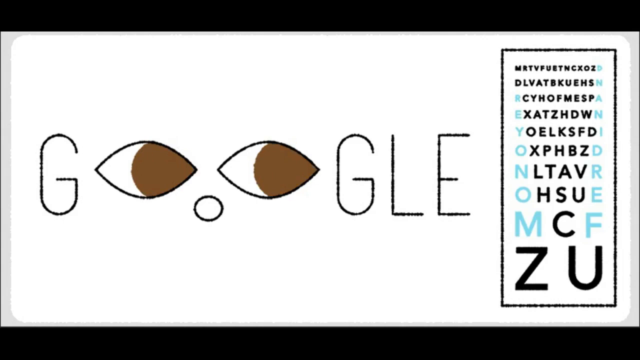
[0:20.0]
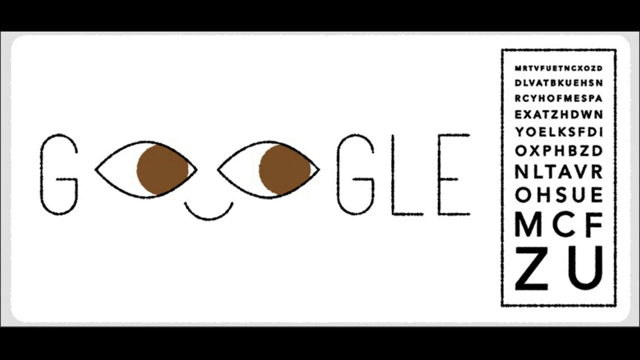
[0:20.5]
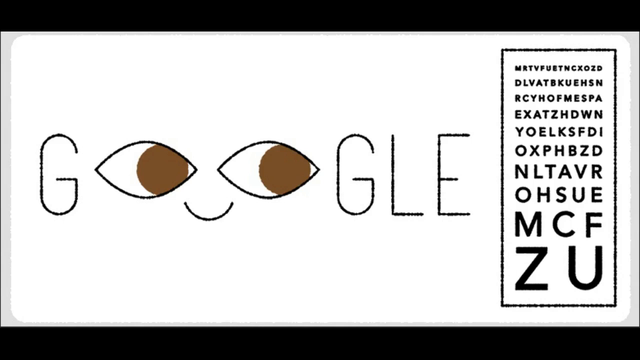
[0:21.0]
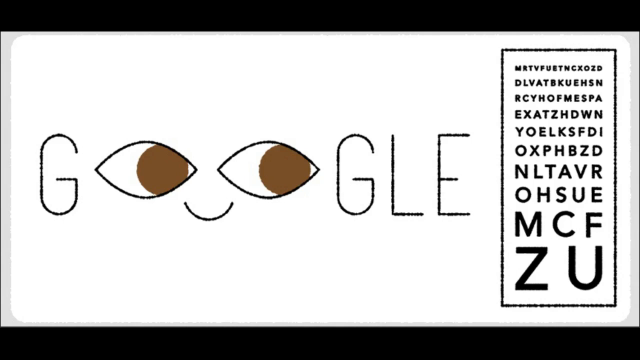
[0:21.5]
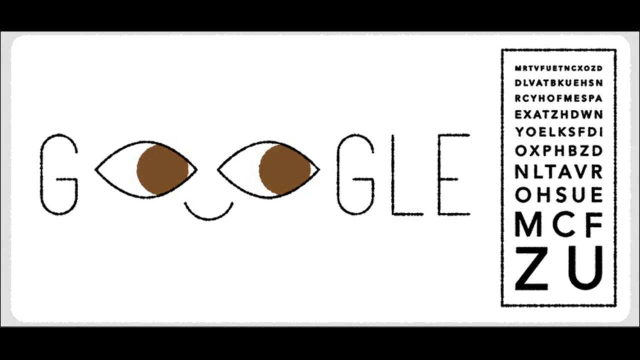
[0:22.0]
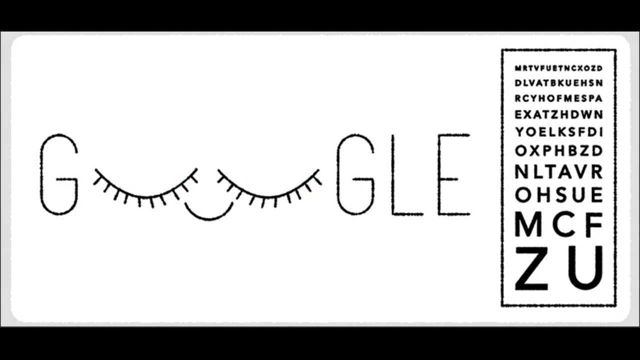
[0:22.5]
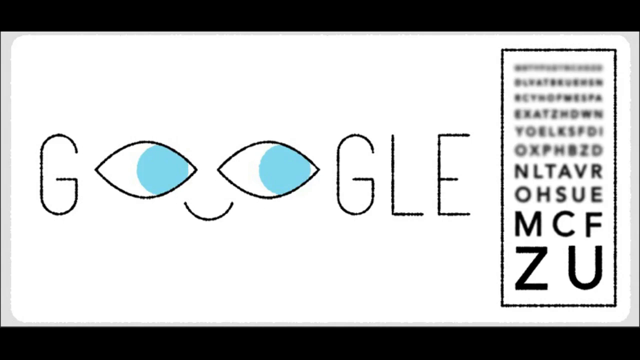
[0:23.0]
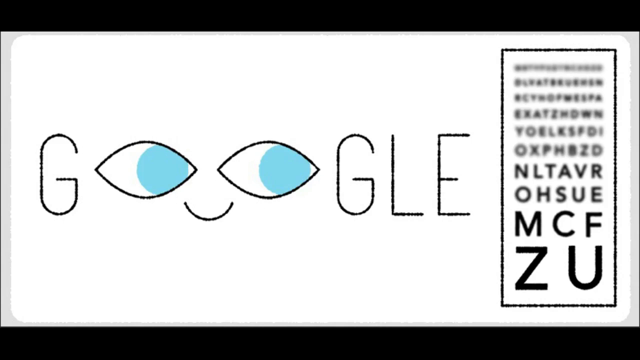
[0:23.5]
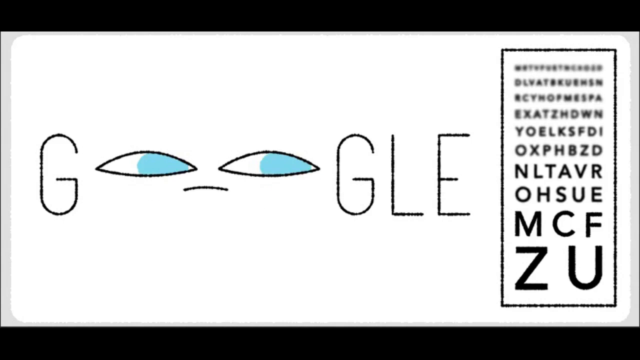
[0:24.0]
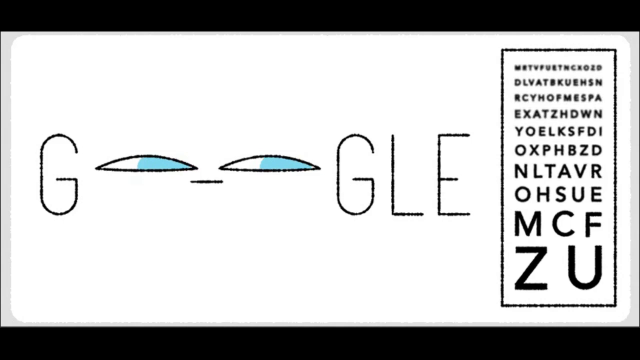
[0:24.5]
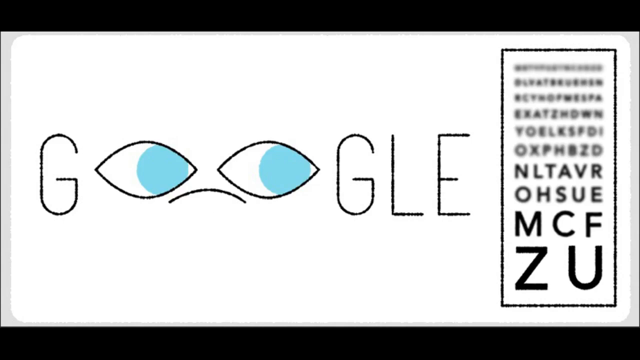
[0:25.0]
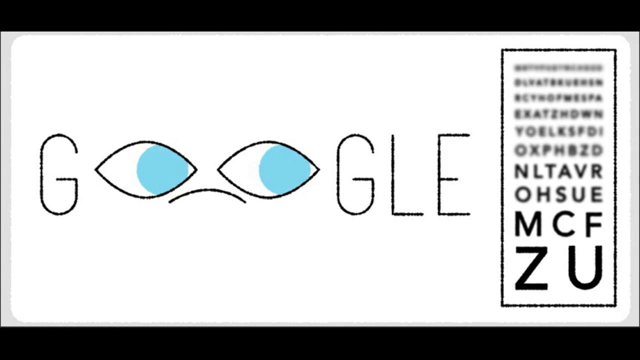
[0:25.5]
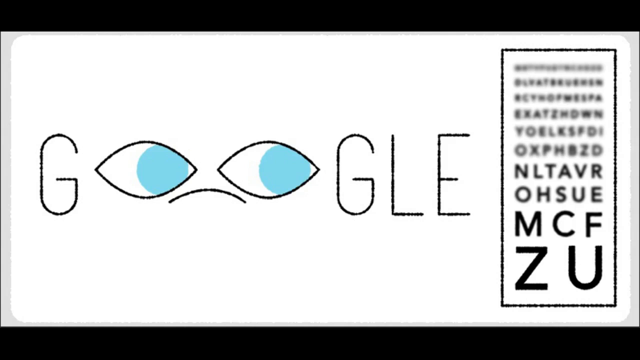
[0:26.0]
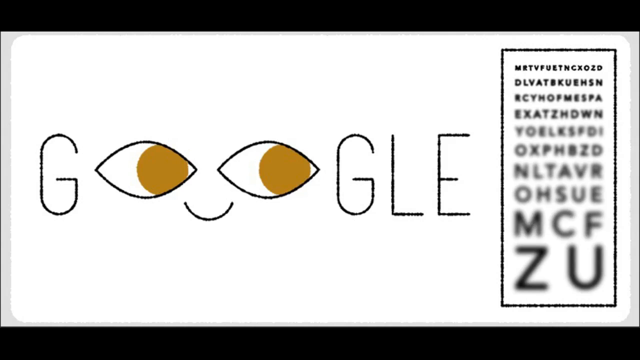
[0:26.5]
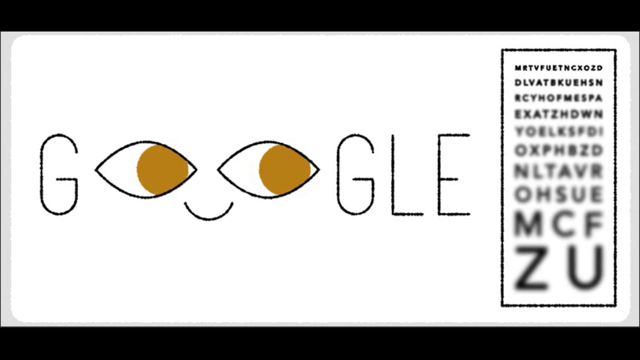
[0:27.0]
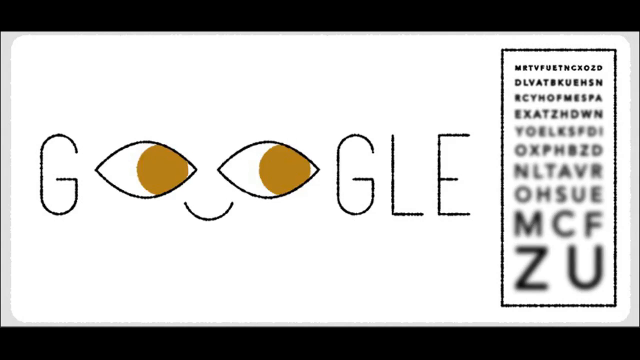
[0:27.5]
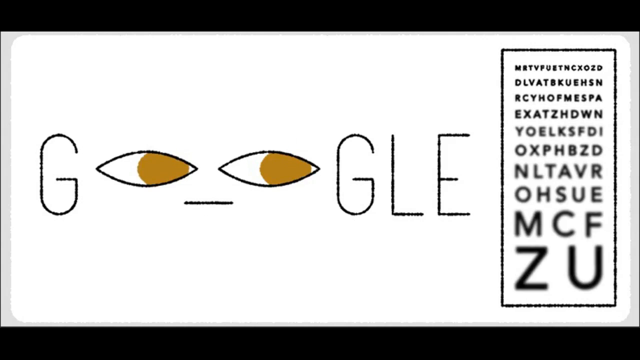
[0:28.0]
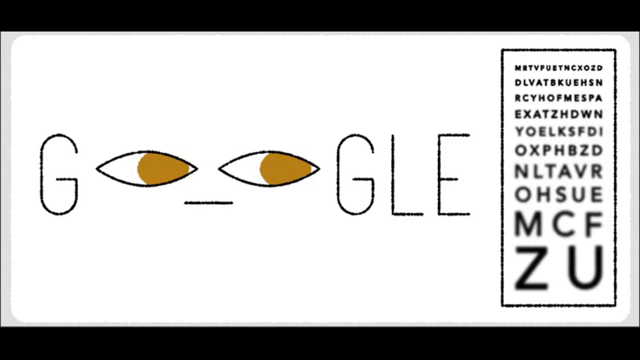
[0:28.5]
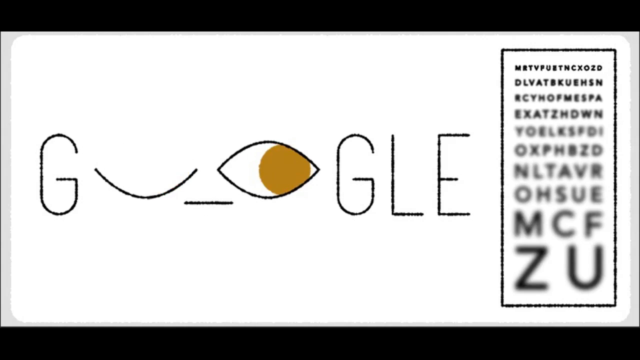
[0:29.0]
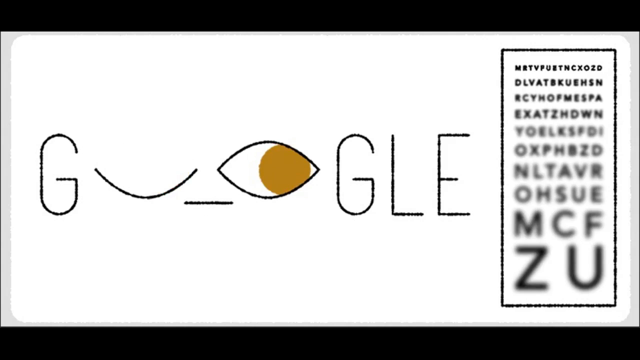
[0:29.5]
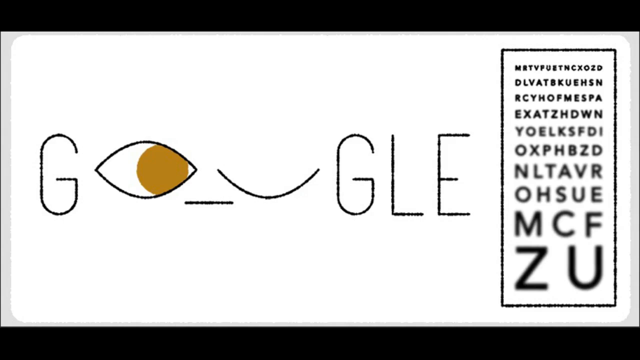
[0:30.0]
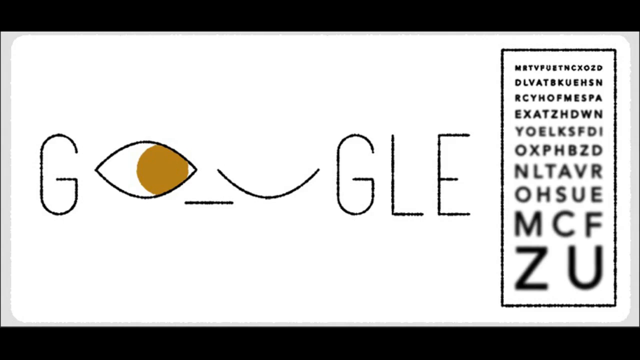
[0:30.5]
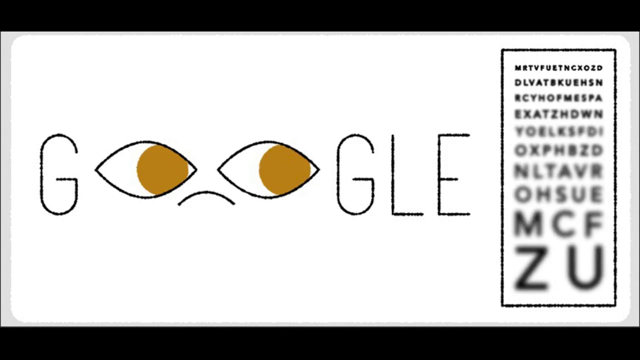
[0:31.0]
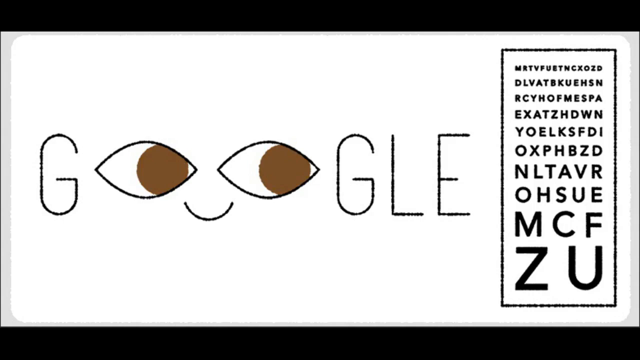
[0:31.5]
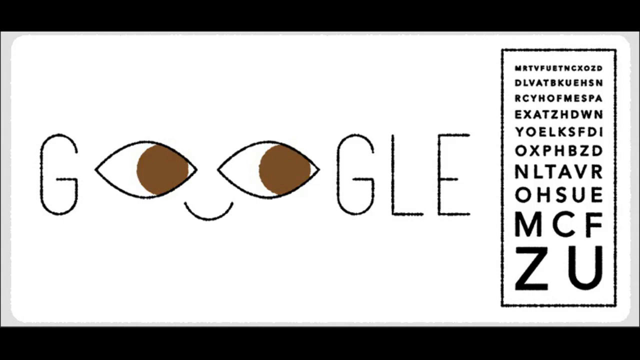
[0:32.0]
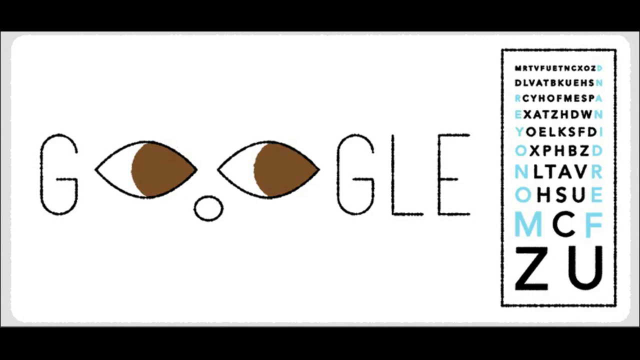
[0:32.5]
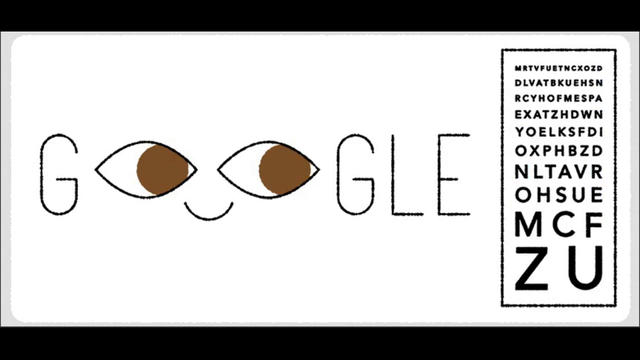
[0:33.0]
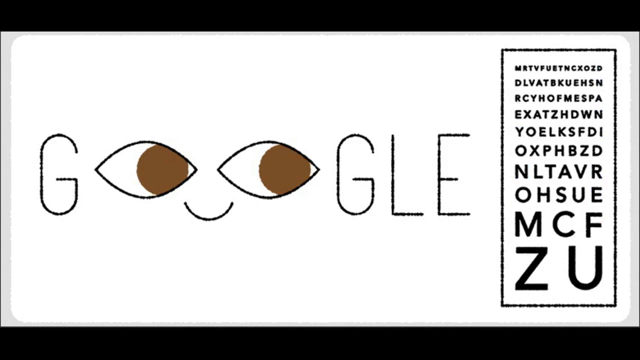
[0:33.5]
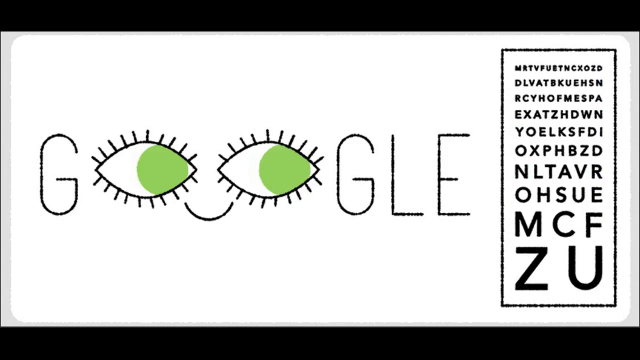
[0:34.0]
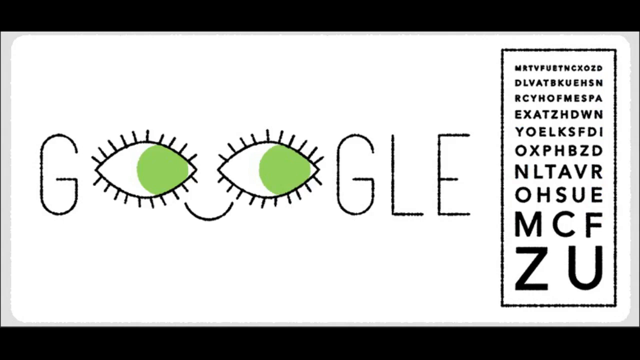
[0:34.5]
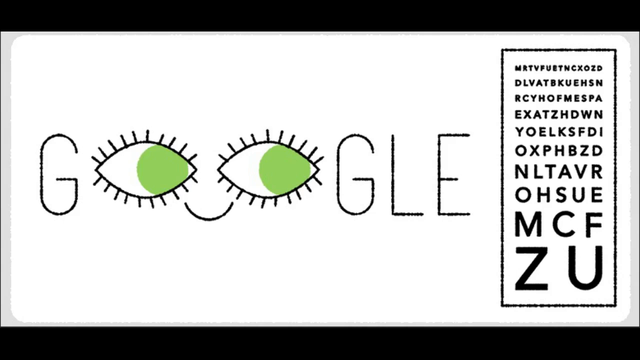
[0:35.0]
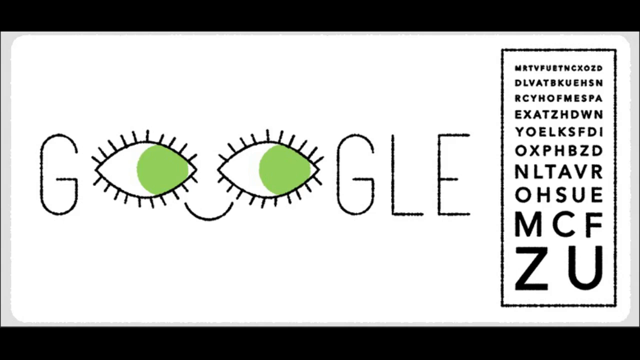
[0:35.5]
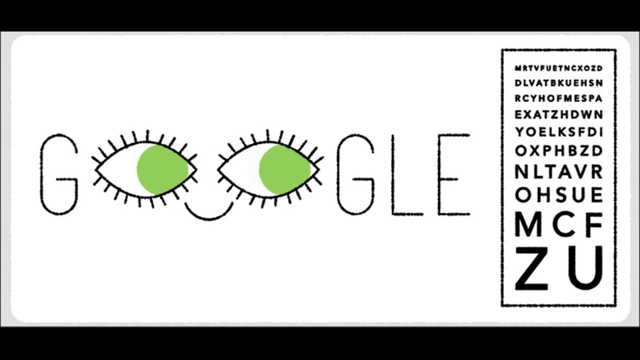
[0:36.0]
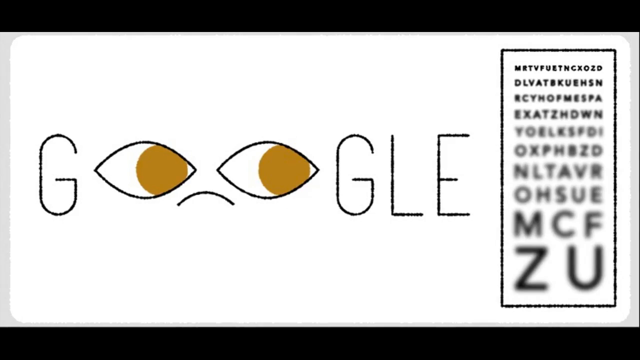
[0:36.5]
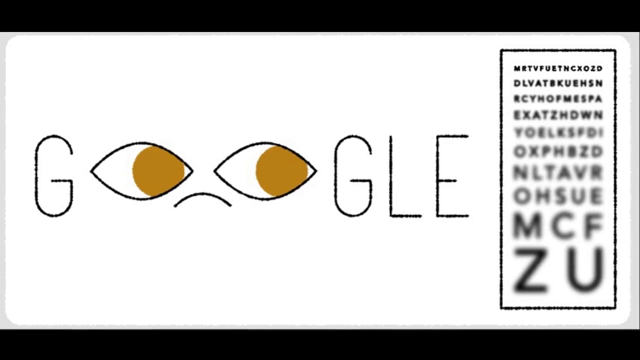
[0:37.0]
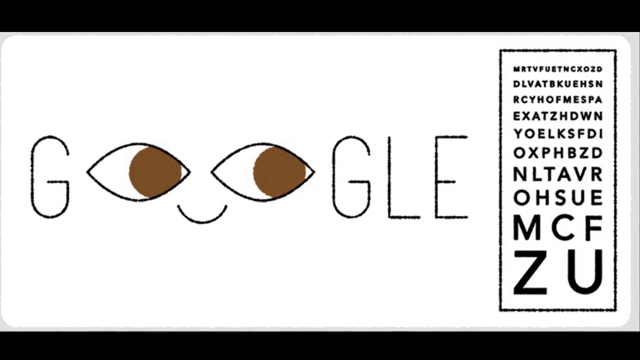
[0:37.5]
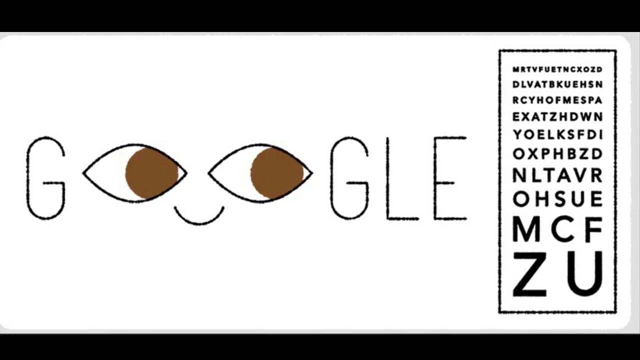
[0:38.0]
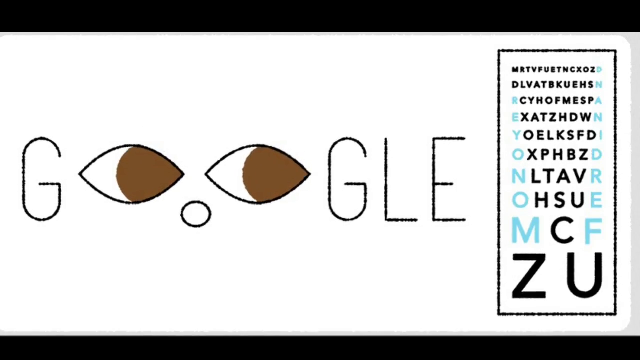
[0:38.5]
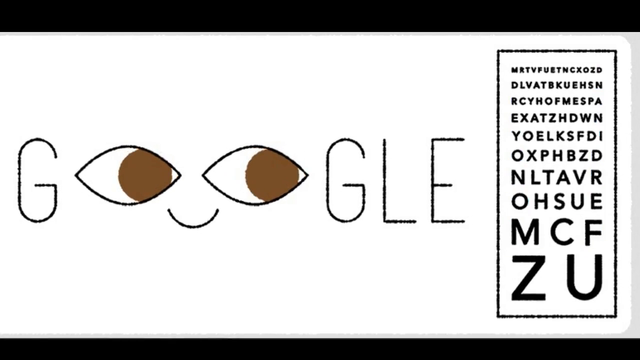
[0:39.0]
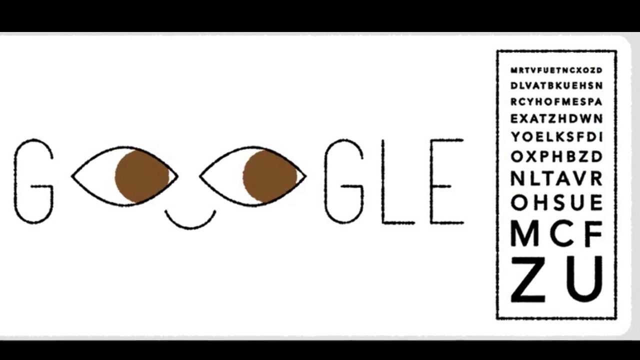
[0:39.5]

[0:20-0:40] The Google eyes are brown and cut to the side with a smiling face. They turn green, then blue, looking like big blue eyes, then brown. An eye winks: the left eye winks, then the right eye winks. The letters on the right side of the screen start to change colors. They begin all black, then change to black and blue, with the letters black in the middle and blue up the right and left sides. The letters are larger toward the bottom of the screen. Up the left side they get smaller in a powder blue color. On the right side they are larger, with a large F, and above it the letters get smaller all the way to the top in light blue lettering.